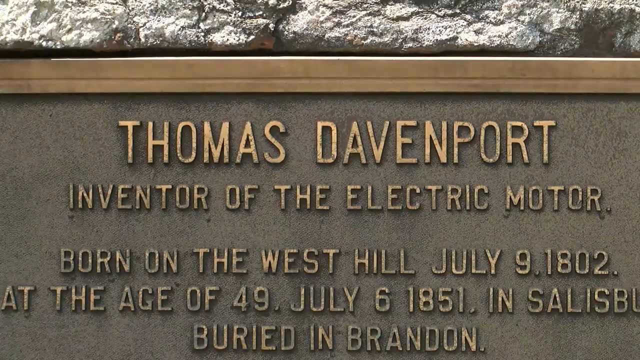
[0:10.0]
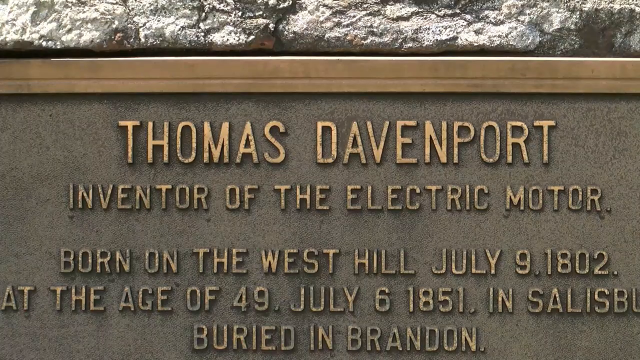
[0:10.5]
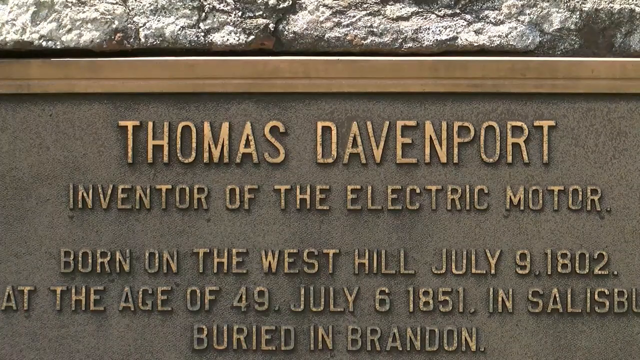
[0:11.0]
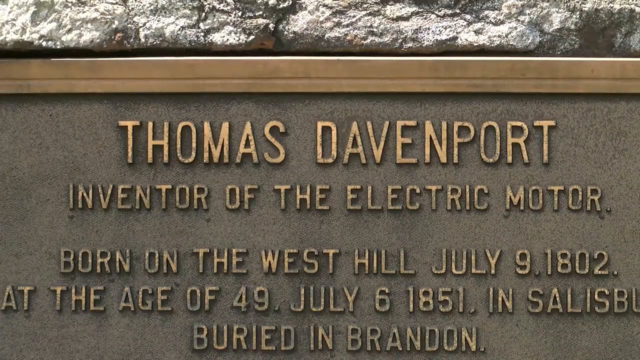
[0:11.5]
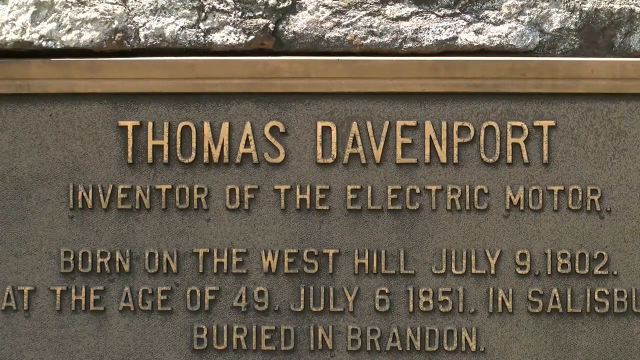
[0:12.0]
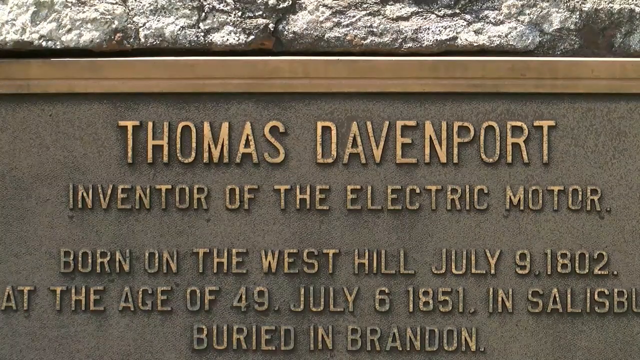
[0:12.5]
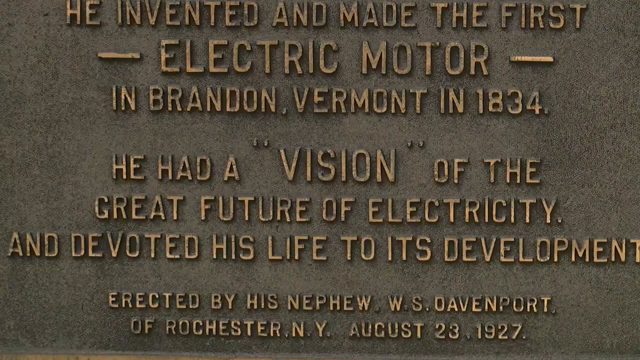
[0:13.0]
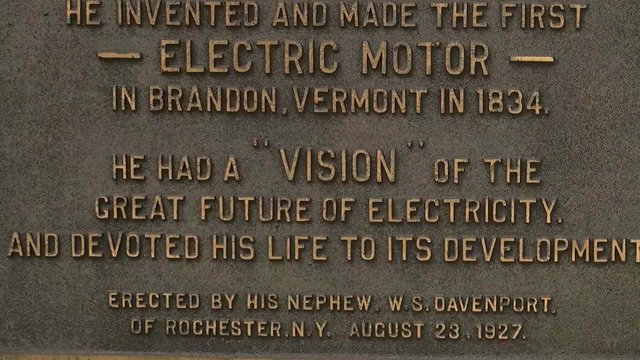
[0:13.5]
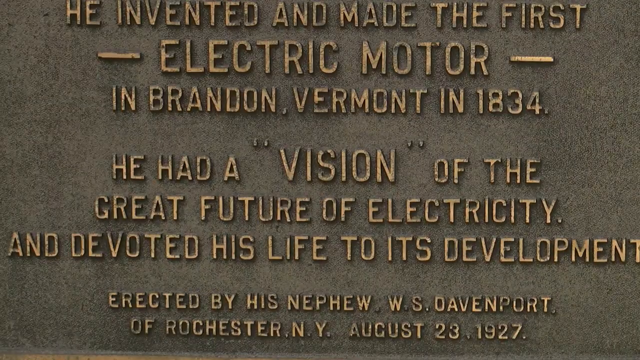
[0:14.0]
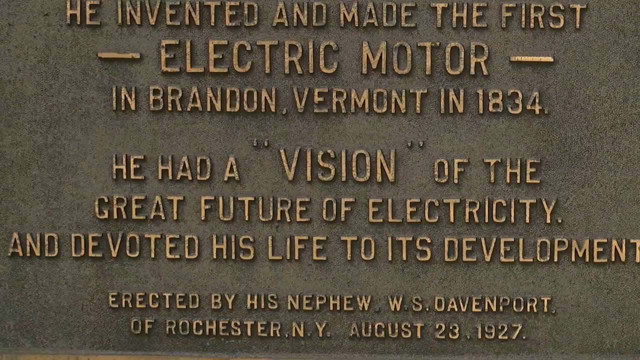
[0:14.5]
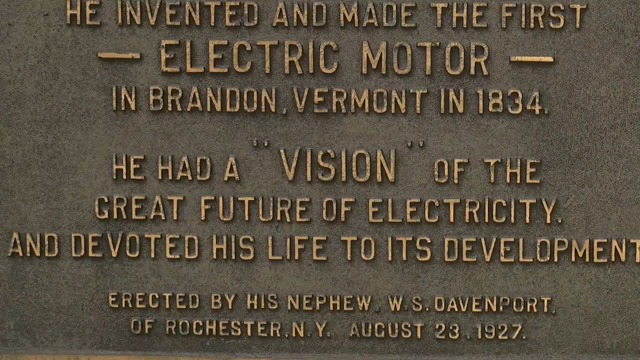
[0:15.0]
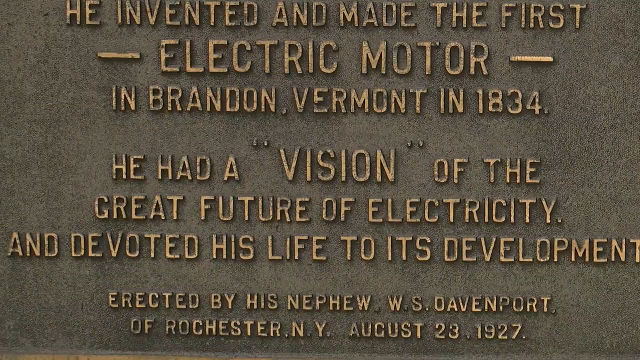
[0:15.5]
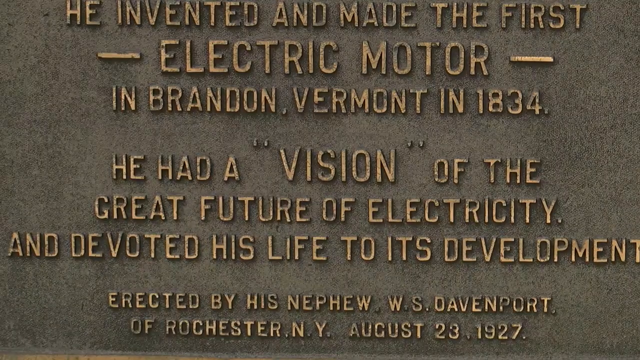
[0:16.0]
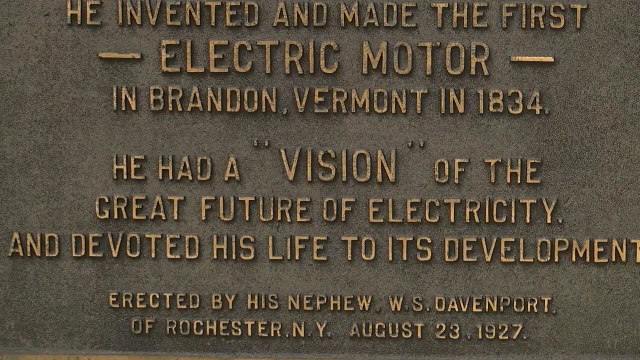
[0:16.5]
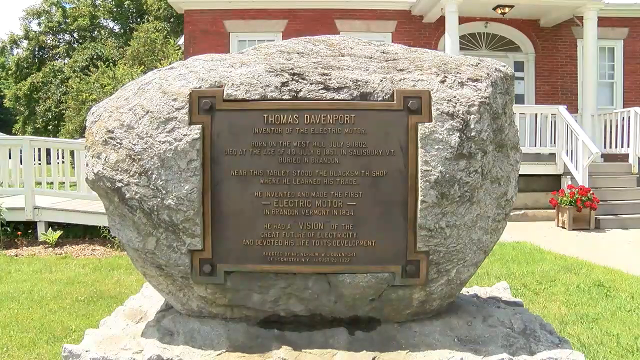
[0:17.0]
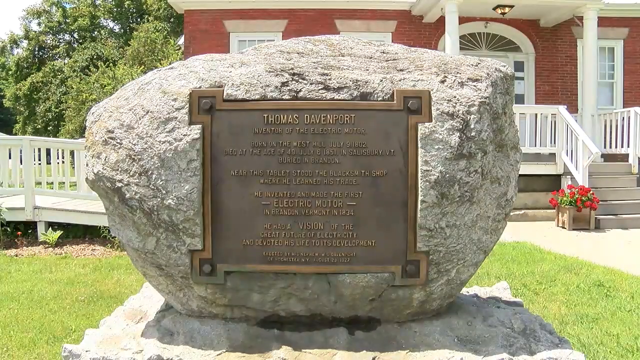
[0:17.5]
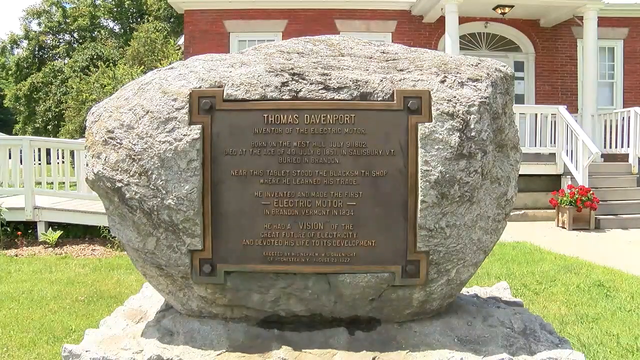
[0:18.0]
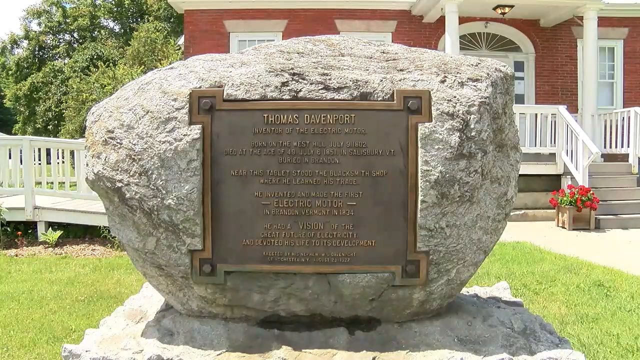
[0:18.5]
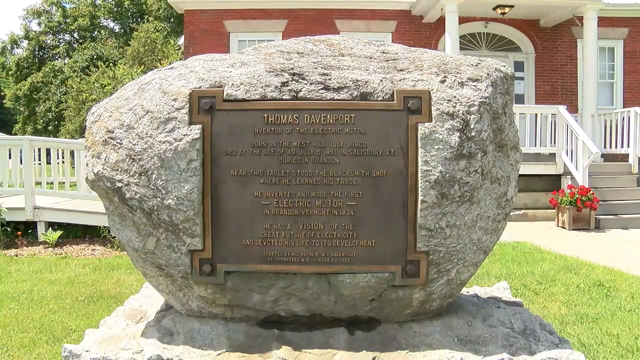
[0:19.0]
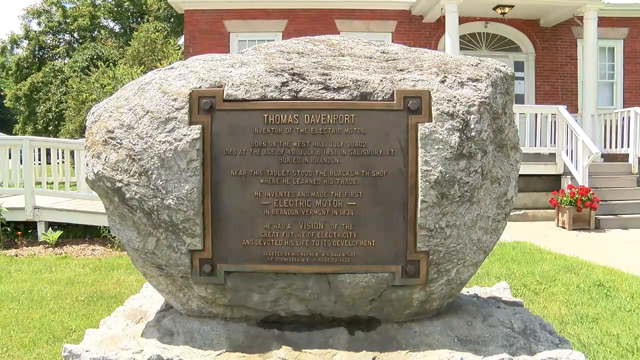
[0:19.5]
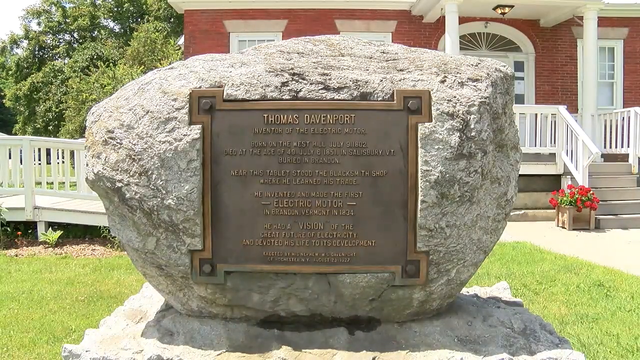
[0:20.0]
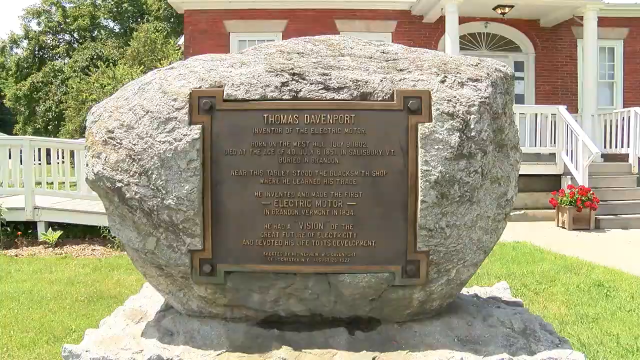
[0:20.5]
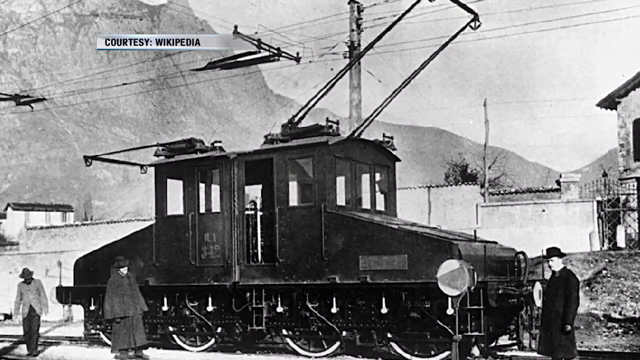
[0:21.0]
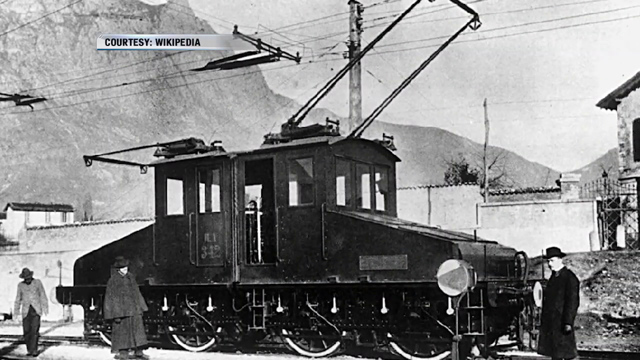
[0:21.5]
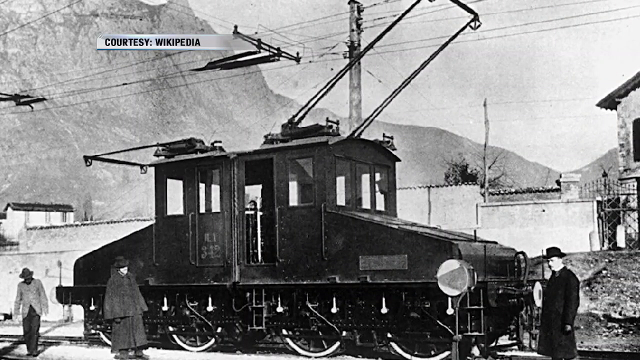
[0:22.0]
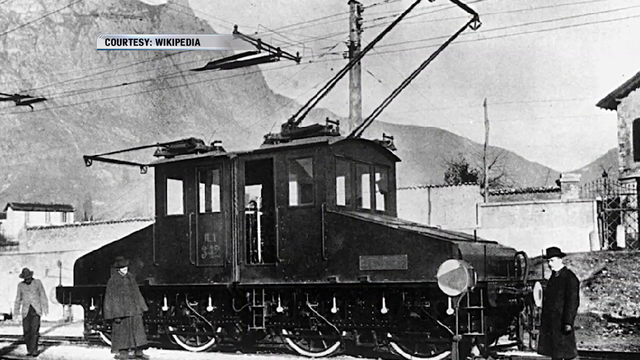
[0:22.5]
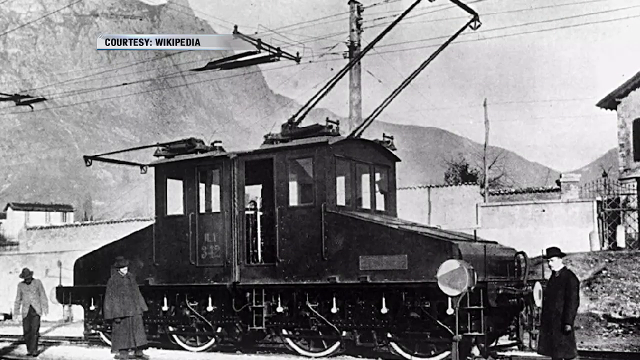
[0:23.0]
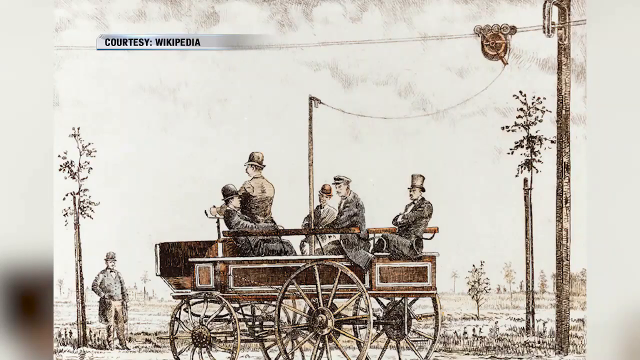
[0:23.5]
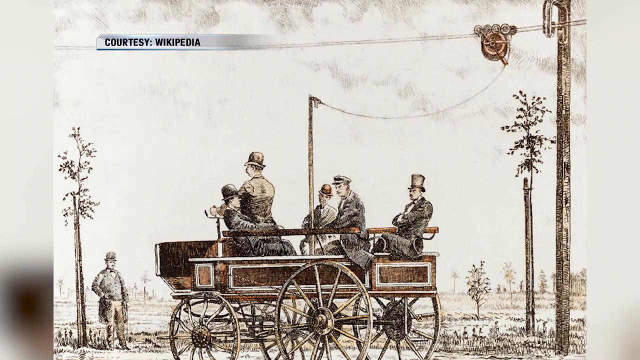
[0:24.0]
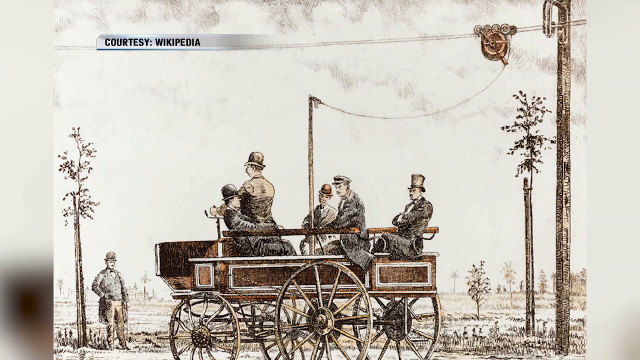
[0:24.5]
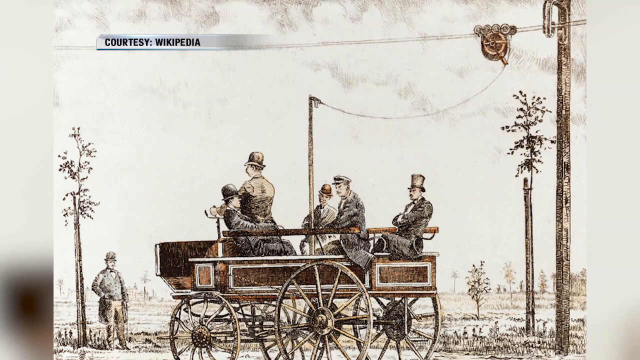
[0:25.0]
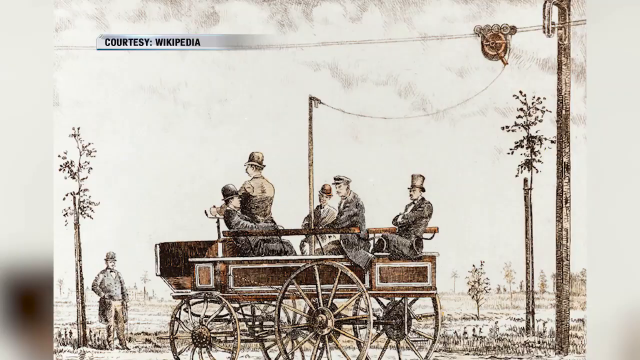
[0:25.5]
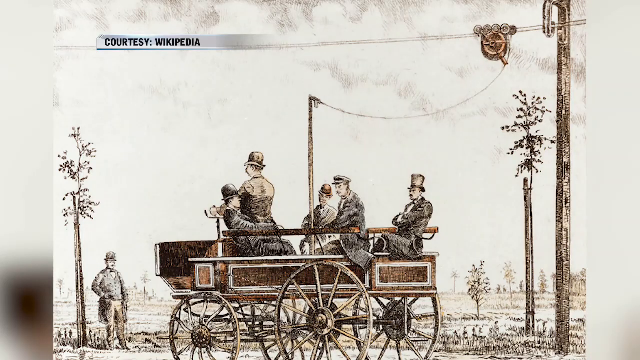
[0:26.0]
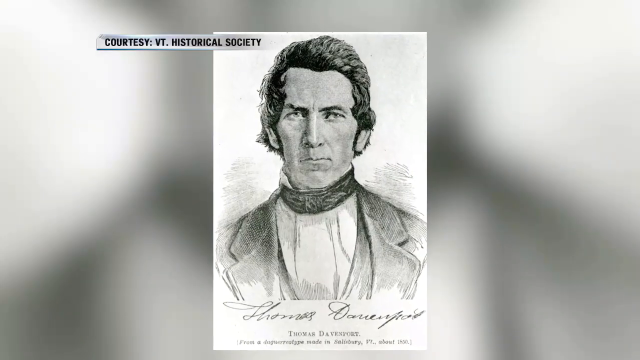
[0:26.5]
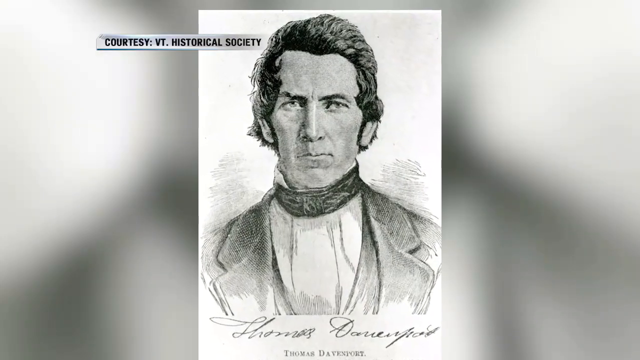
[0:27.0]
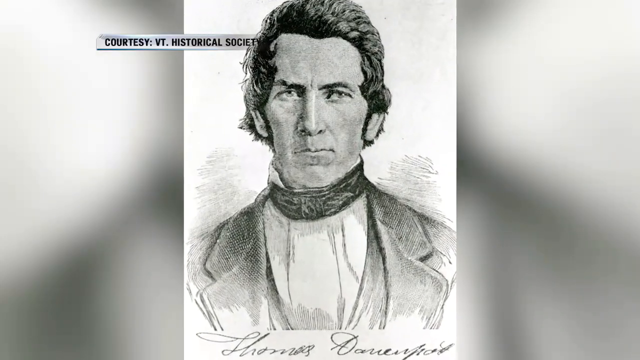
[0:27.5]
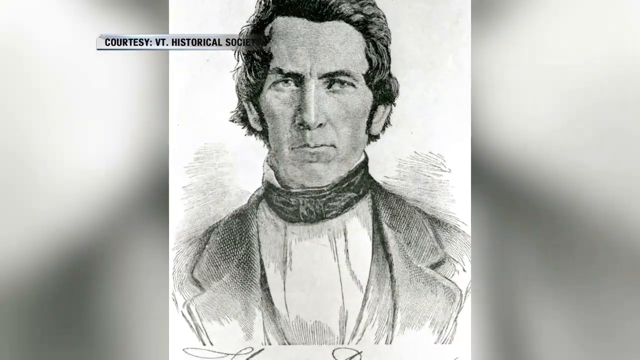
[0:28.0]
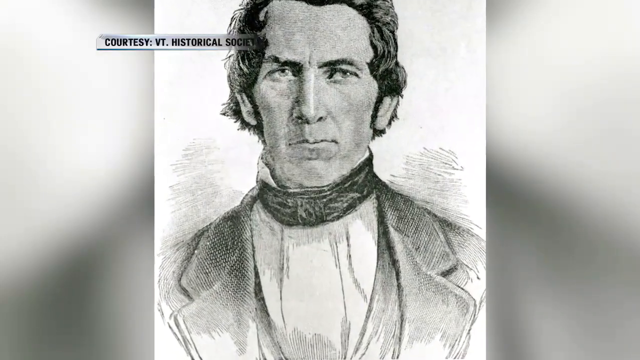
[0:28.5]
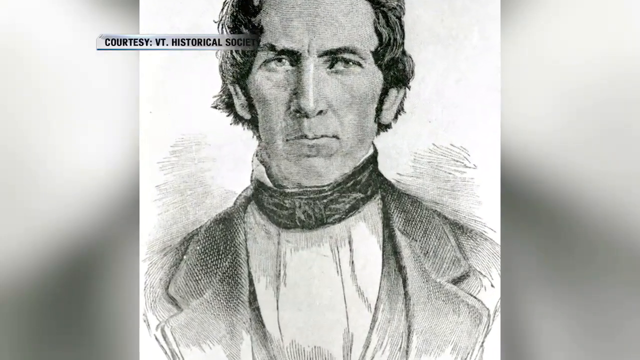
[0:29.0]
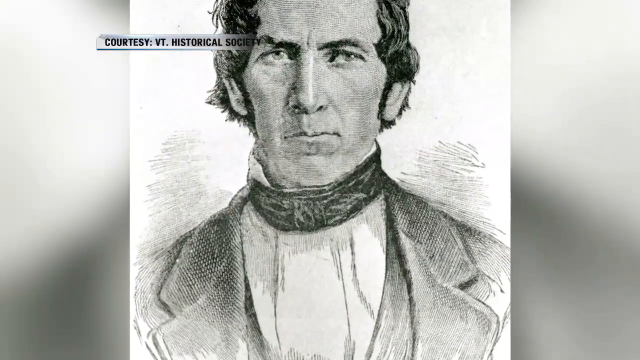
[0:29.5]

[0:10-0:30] A plaque with gold-colored words reads "Thomas Davenport, inventor of the electric motor, born on the West Hill, July 9, 1802" and gives the age of 49 and July 6, 1851. The video cuts to another plaque, also written in gold, which says he invented the motor and that "he had a vision of the great future of electricity and devoted his life to its development." The camera pans out to a wider shot of the same plaque, embedded in a huge rock or stone that is kind of white and gray and sitting on a lawn. Behind it is a brick house with white wooden trim. The video then cuts to a picture of a wagon with people drawn in it, all seemingly men, and one man standing outside looking at them; there is also something kind of like a light post. It then cuts to another drawing of a man, like a portrait.